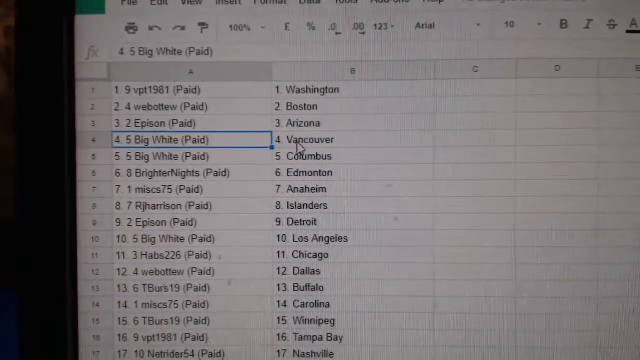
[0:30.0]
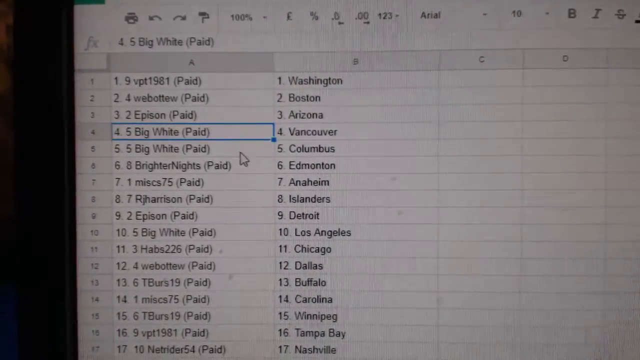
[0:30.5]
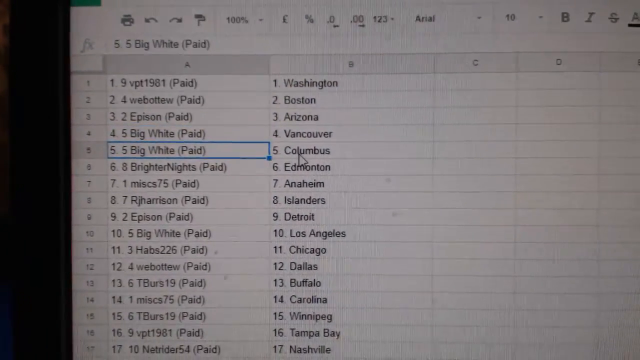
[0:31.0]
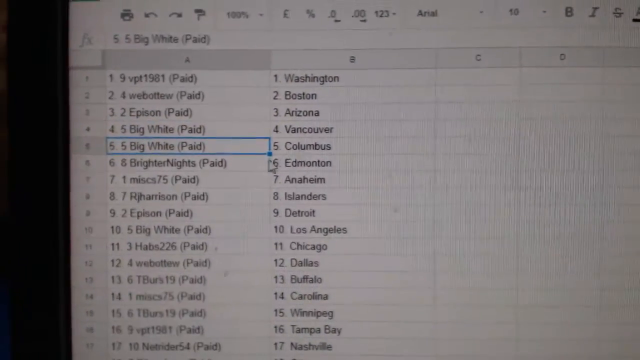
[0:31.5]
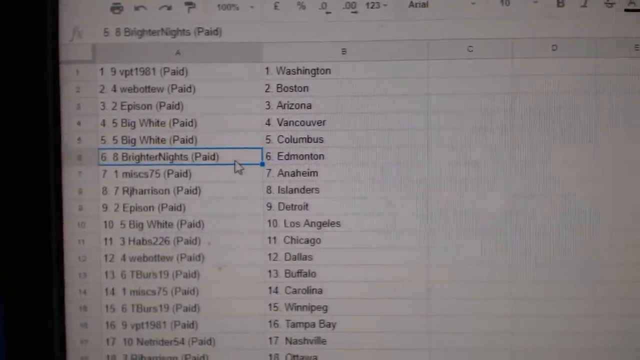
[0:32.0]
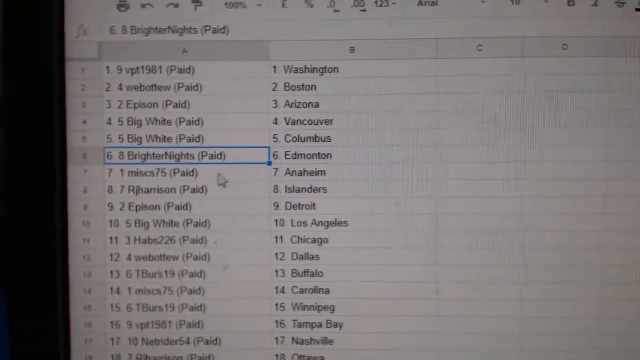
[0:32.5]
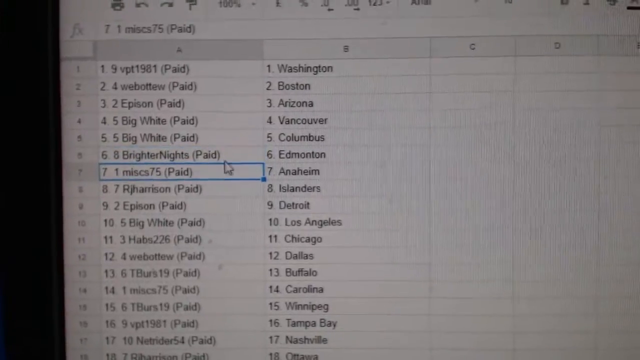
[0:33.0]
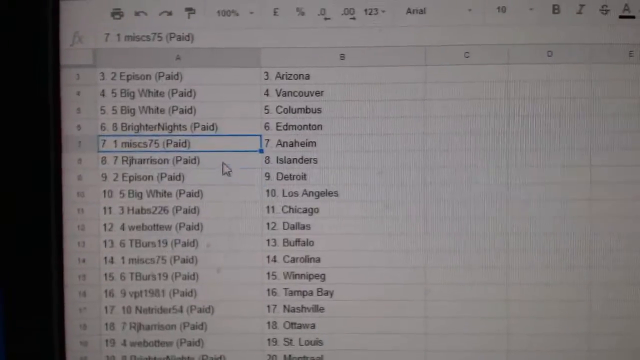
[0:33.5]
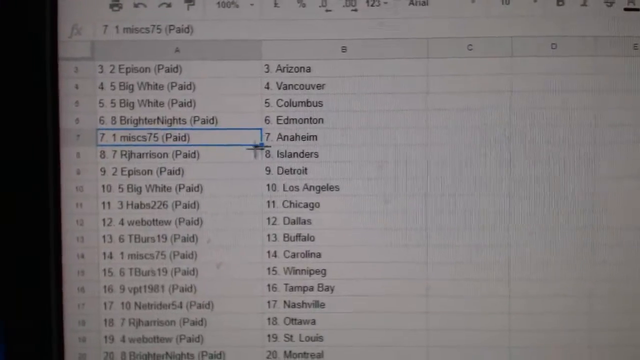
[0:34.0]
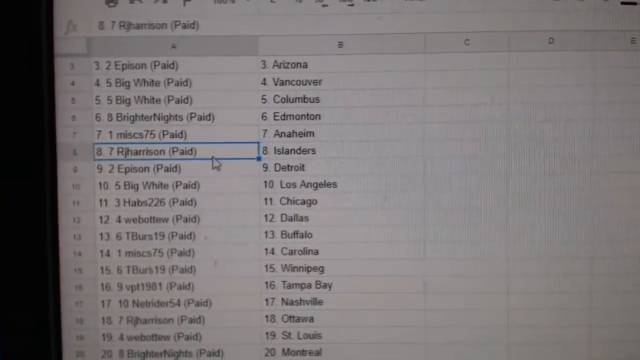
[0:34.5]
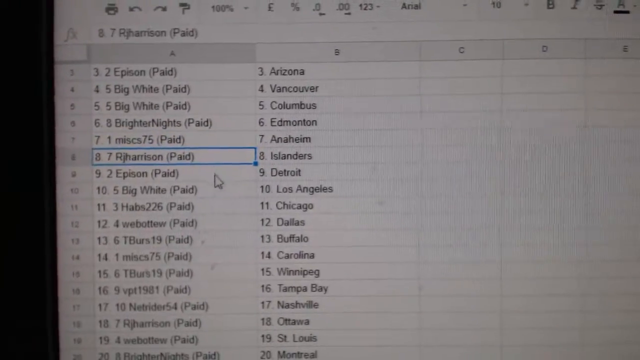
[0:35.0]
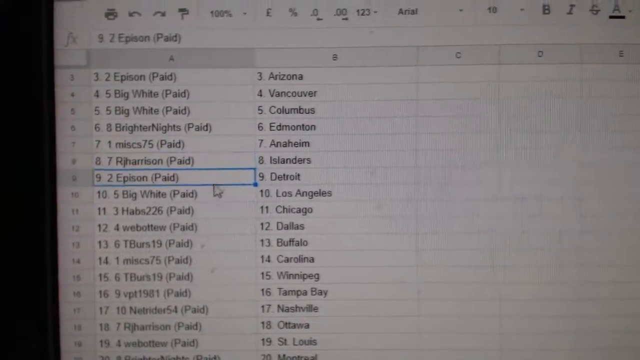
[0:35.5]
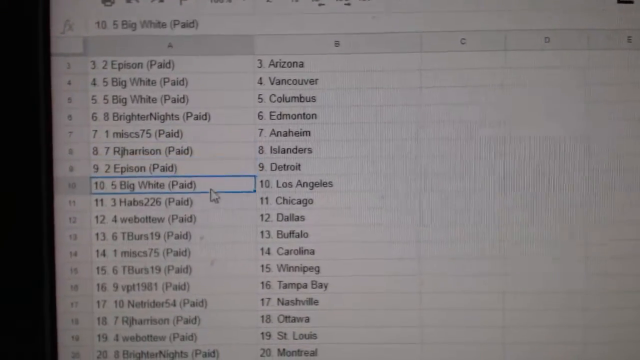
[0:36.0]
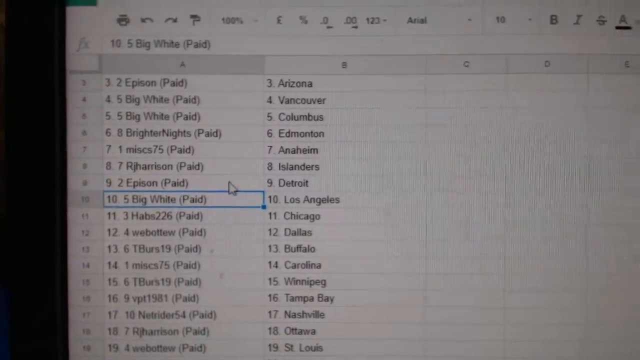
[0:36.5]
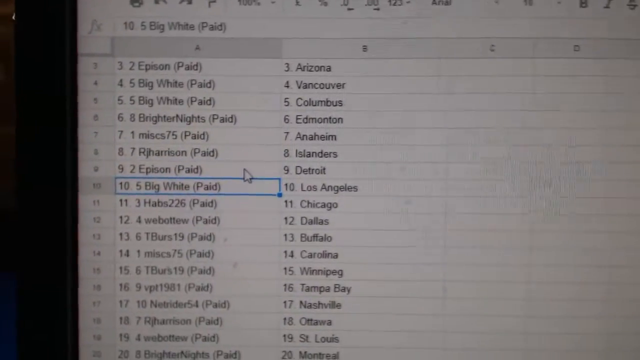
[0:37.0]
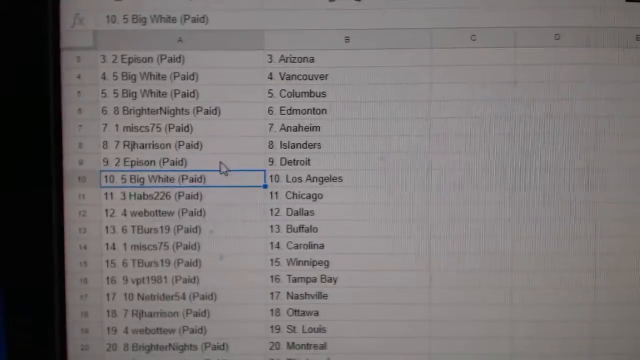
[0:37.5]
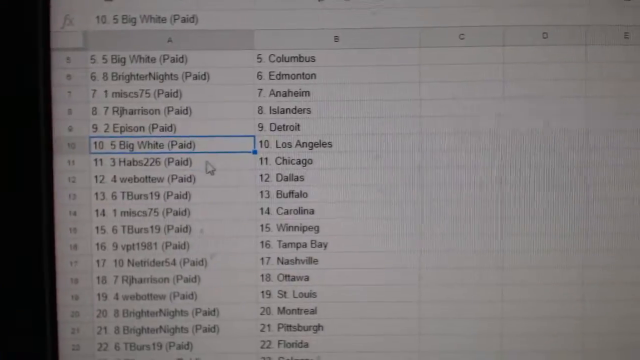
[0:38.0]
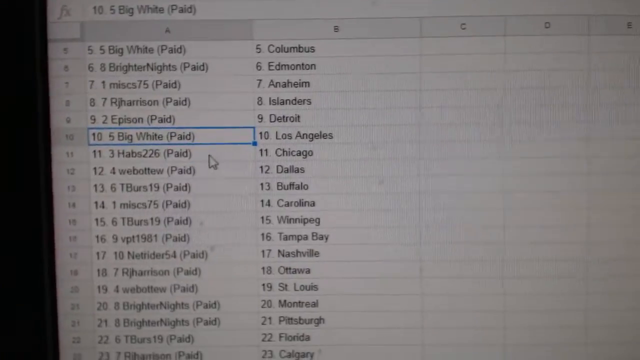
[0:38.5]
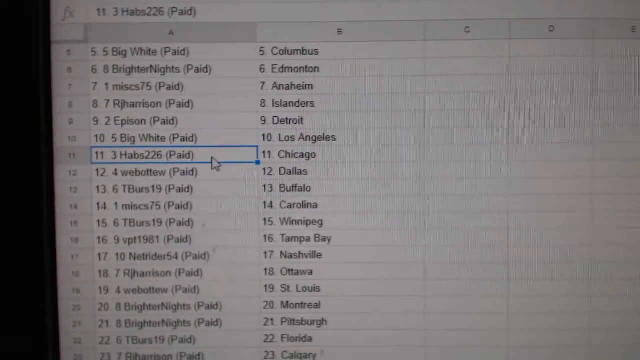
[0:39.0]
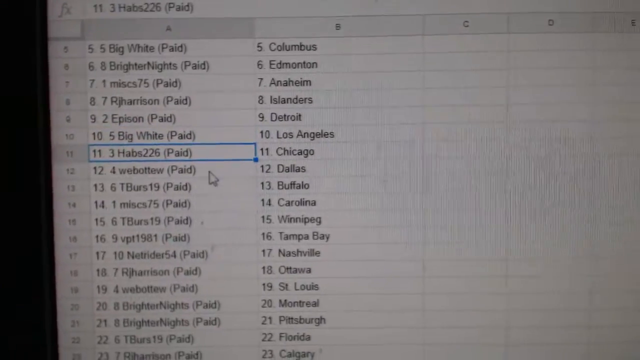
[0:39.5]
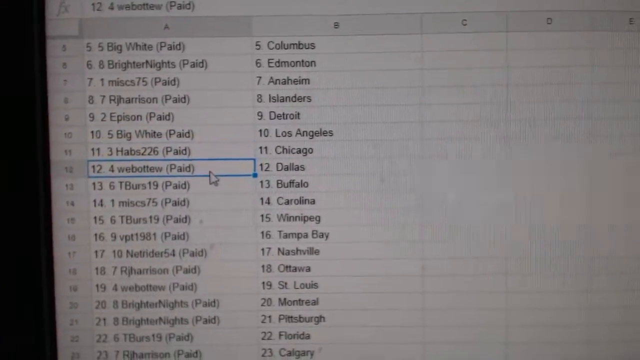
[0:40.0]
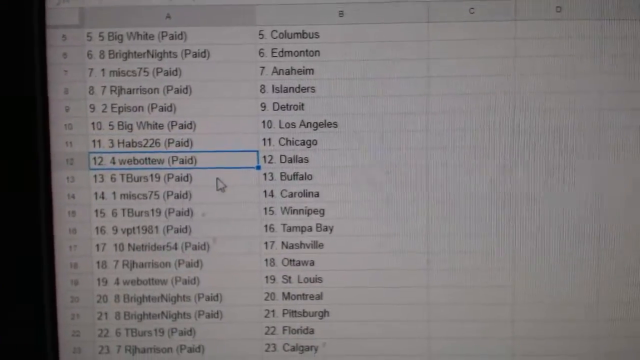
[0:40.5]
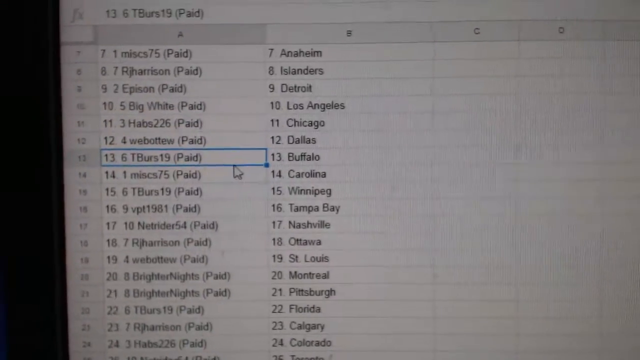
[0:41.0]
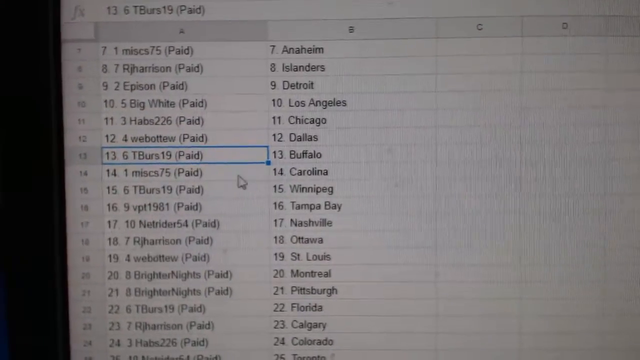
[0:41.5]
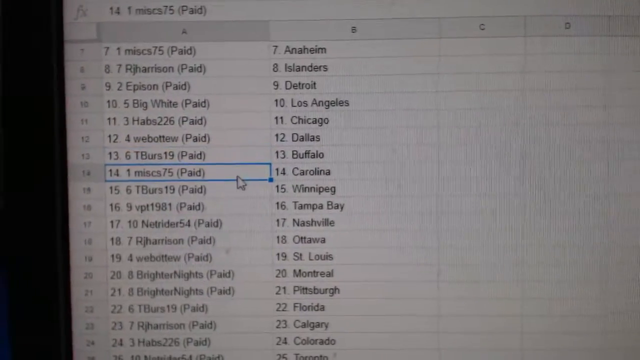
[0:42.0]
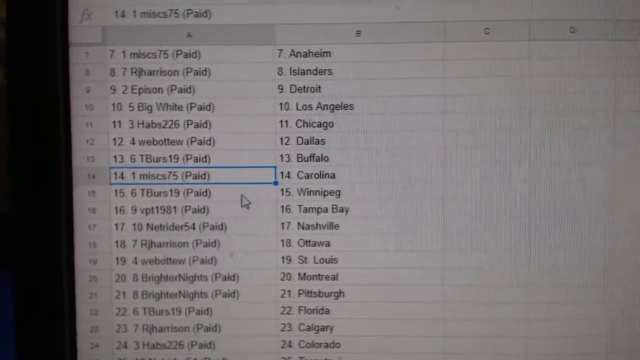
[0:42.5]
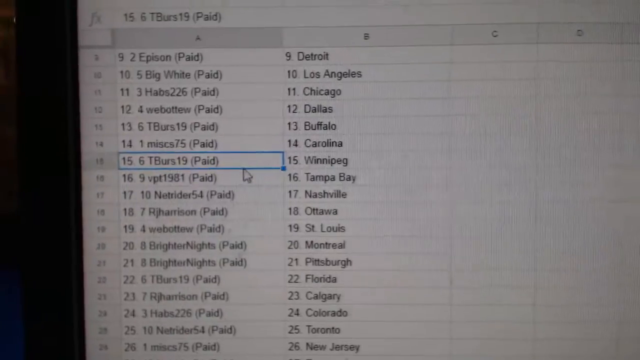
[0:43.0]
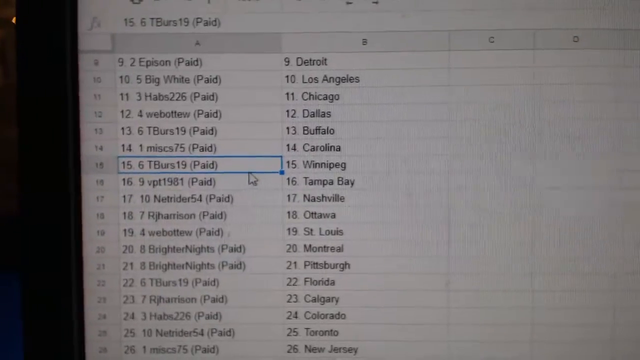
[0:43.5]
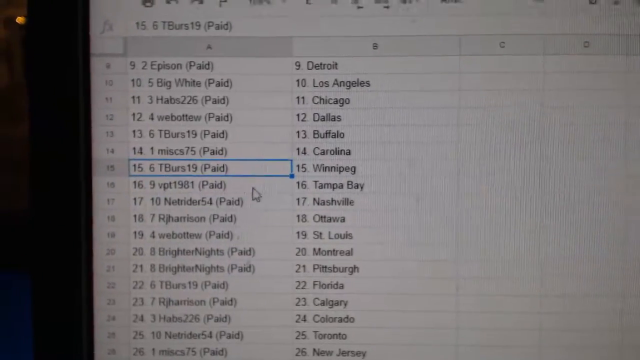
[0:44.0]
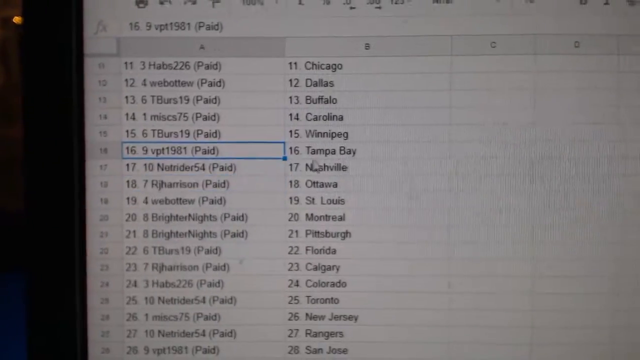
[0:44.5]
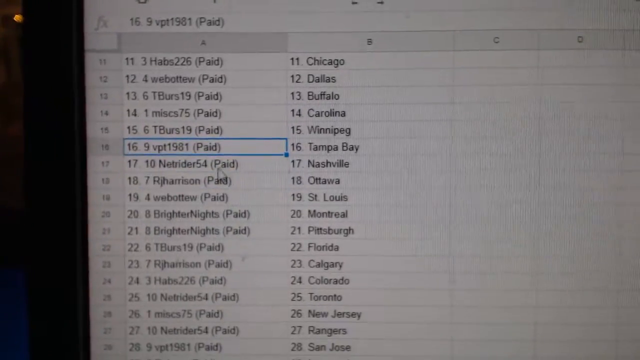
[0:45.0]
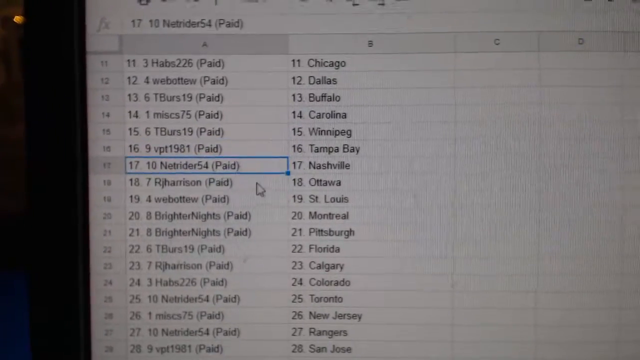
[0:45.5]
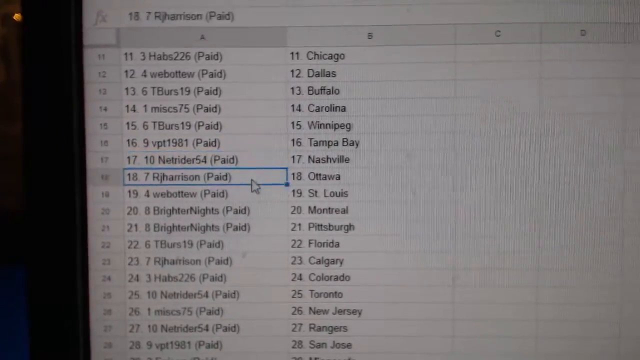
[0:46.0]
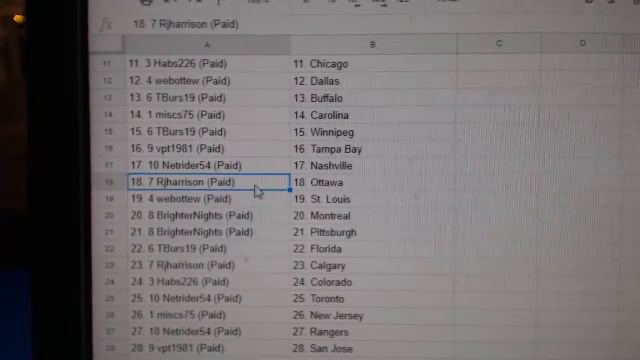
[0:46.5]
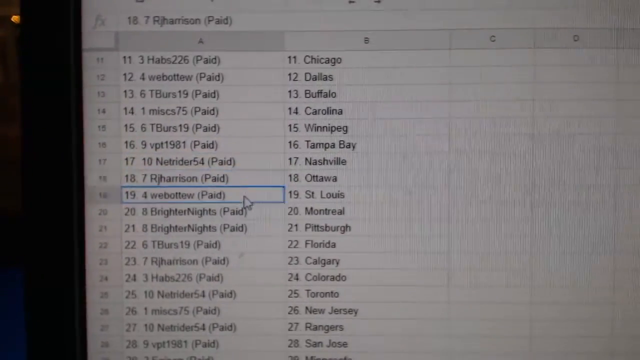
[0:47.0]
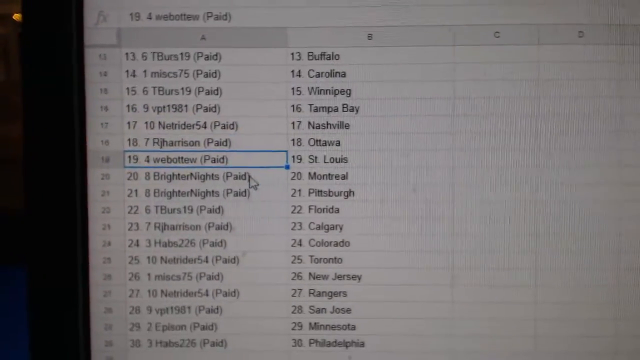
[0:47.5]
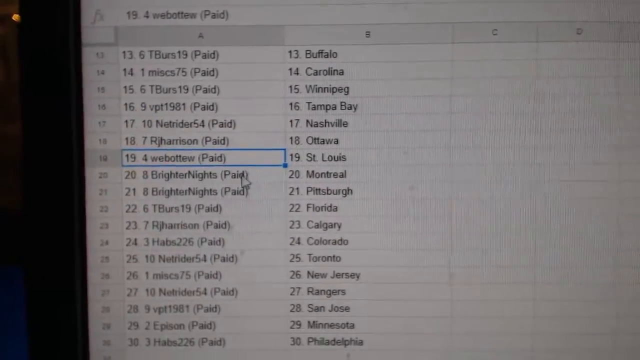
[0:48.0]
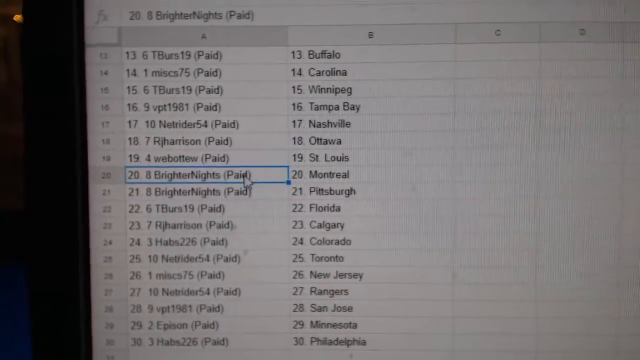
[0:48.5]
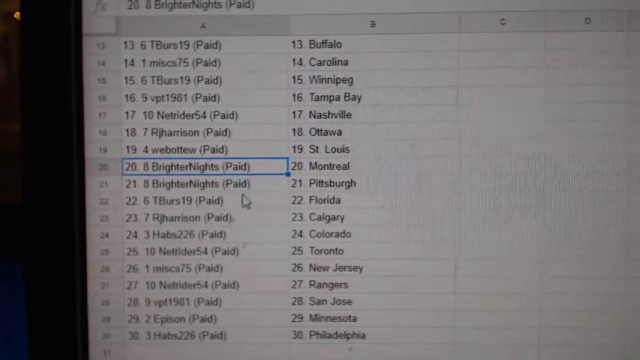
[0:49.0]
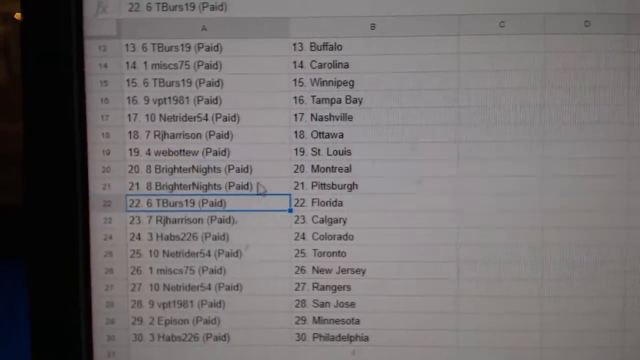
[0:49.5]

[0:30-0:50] The randomly generated words are now on an Excel sheet. Column A contains a random series of letters and numbers, and column B contains what looks to be a mixture of state and city names, reading from top to bottom: Washington, Boston, Arizona, Vancouver, Columbus, Edmonton, Anaheim, Islanders, Detroit, Los Angeles, Chicago, Dallas, Buffalo, Carolina, Winnipeg, possibly representing sports teams. The person selects an option in column one; they appear to be scrolling and clicking on random cells filled with different letters and numbers. Each entry has the word "paid" in parentheses after it.